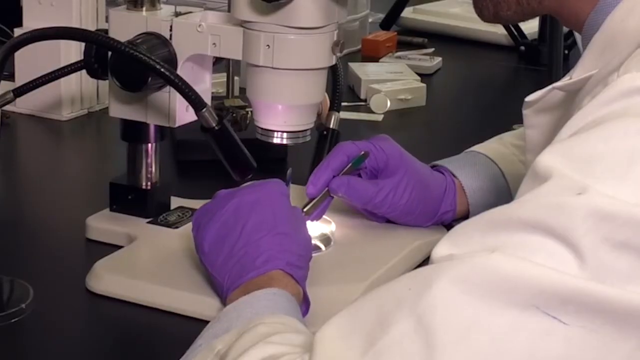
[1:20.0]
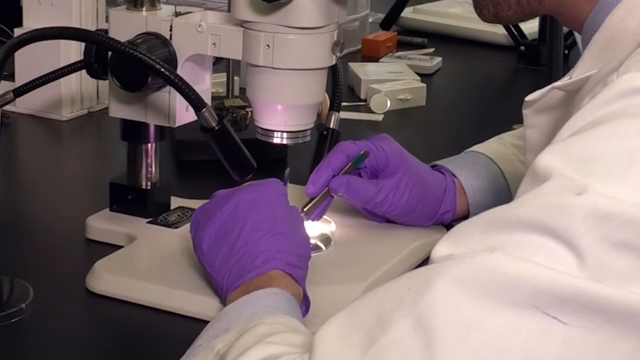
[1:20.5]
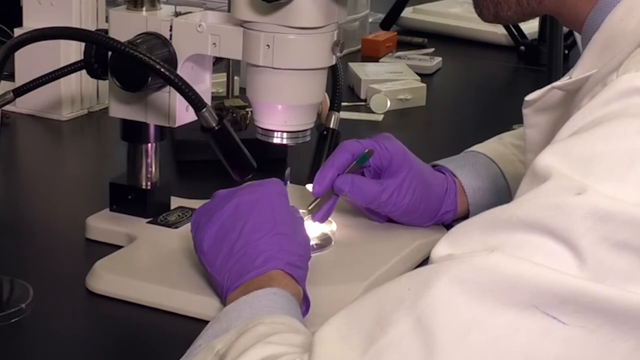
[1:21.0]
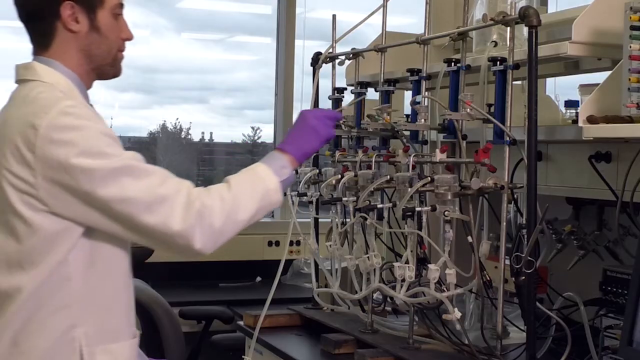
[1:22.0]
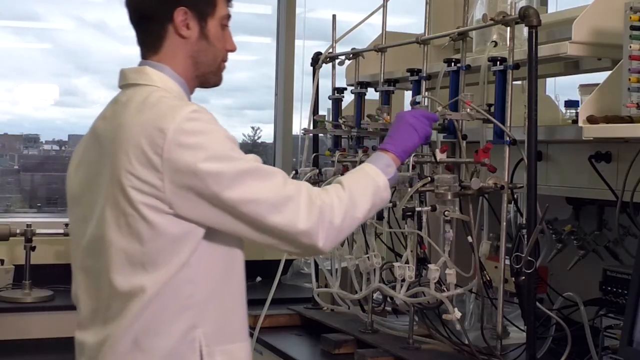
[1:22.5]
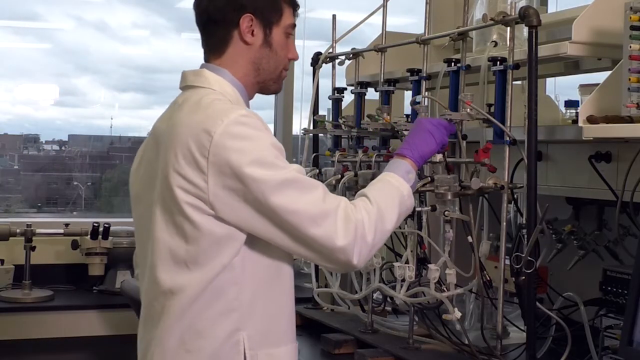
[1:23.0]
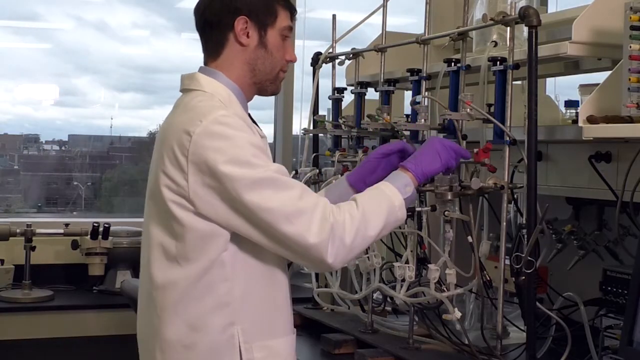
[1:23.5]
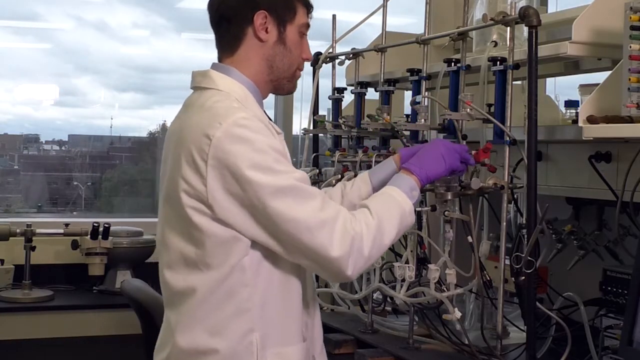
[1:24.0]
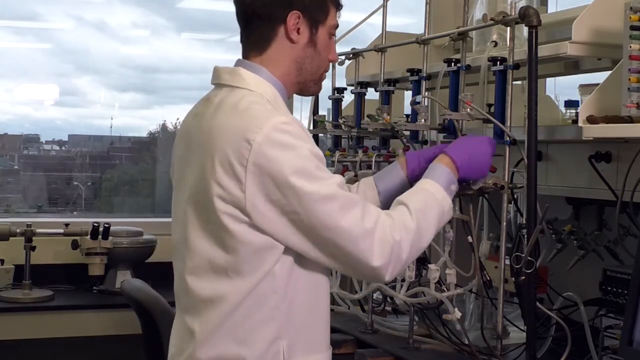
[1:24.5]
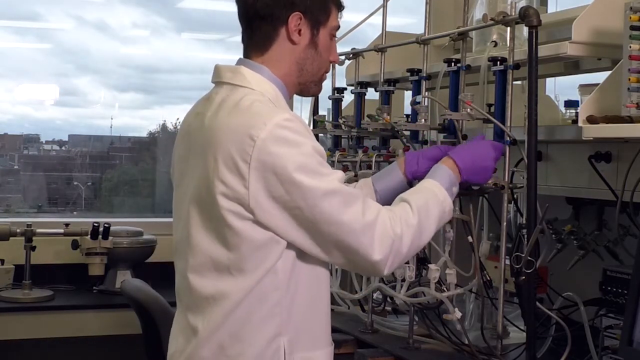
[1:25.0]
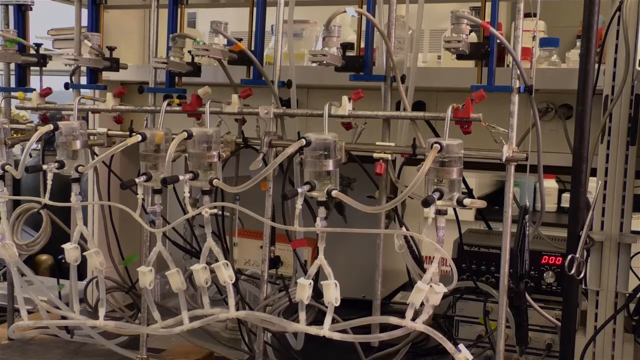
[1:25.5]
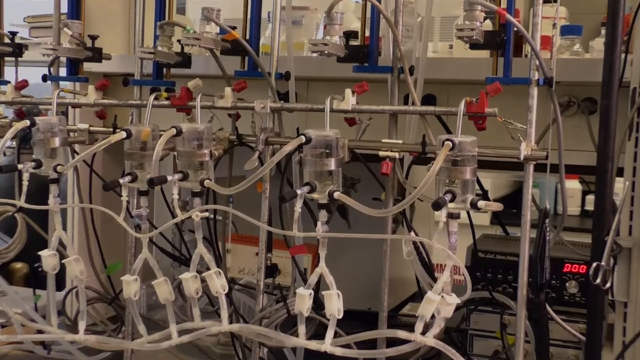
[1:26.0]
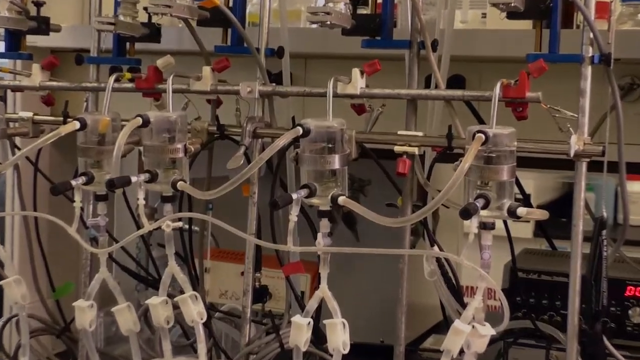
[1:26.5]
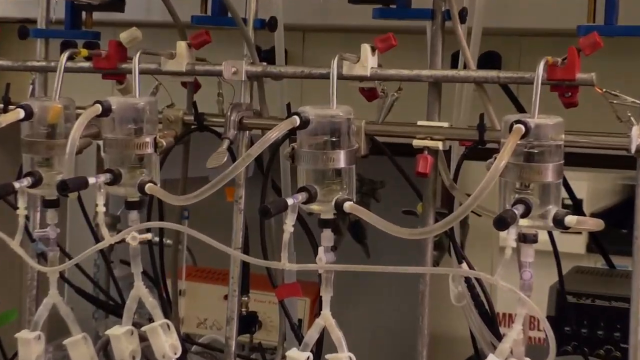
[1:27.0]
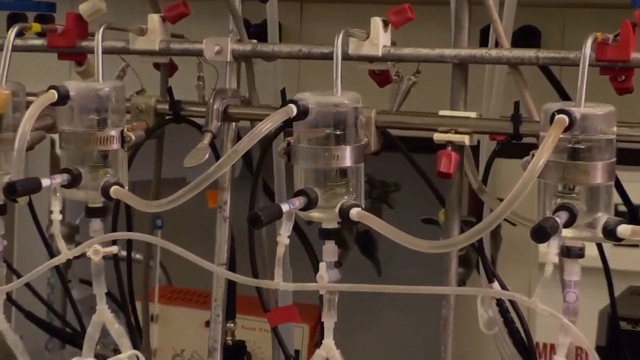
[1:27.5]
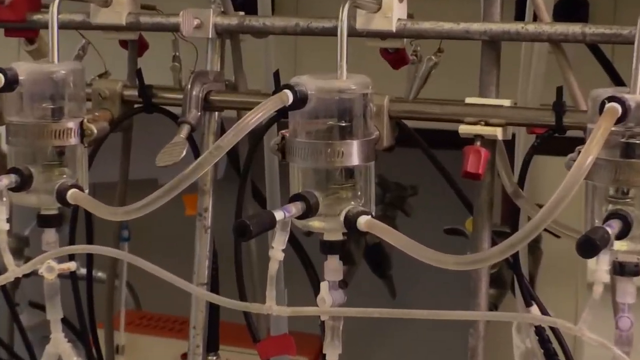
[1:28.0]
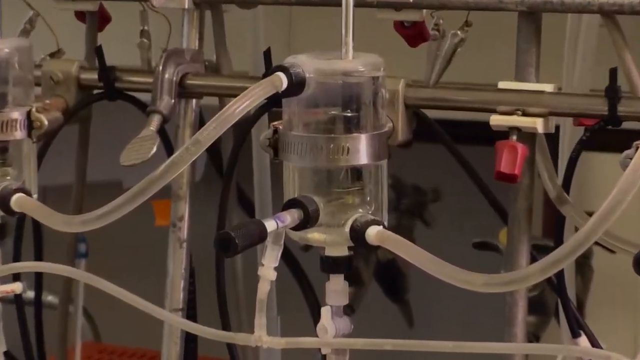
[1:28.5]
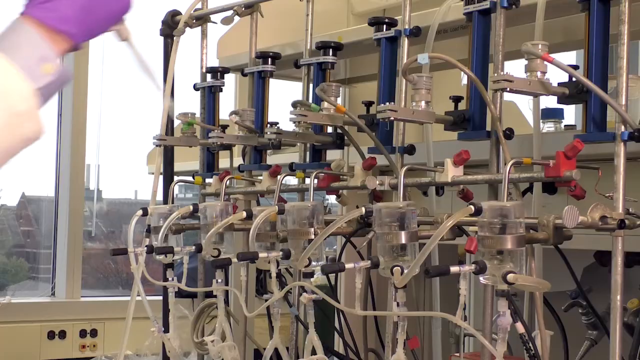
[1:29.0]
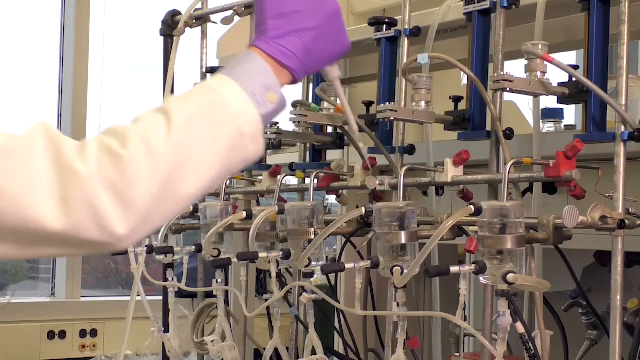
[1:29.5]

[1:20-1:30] A scientist wearing purple gloves examines something under a white microscope, holding a scalpel in his right hand. The view moves across to other medical equipment, which seems to be large tanks all joined together by white plastic tubing. The scientist adds some kind of liquid to the tanks with a pipette. Red taps run all the way along the tubing, and the tubing is joined together and to the tanks with black plastic attachments. A lot of silver piping runs up and down behind the tanks and the plastic tubing. The camera zooms in on one of the tanks as the scientist adds more liquid to it. The scientist, wearing a white coat, works with a microscope, sitting at a black desk. A black, snake-shaped torch illuminates the work he is looking at under the microscope.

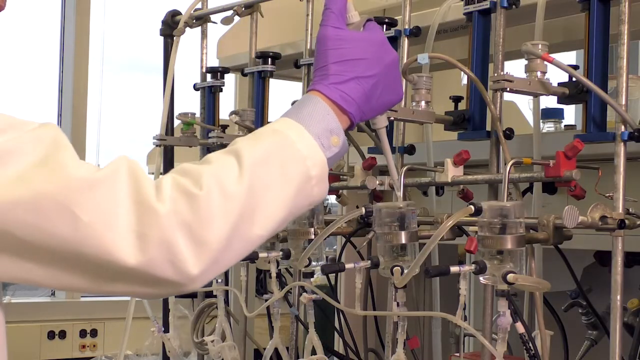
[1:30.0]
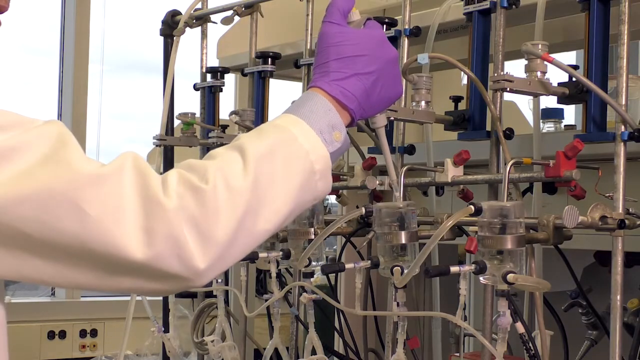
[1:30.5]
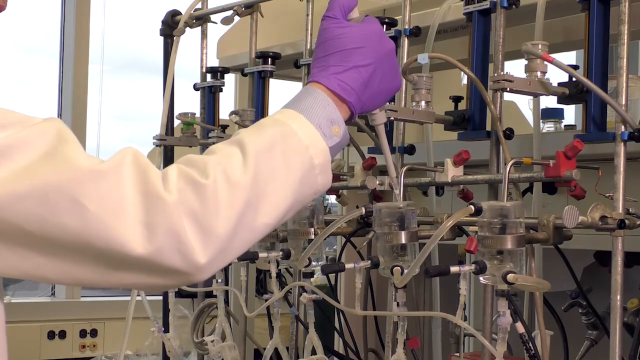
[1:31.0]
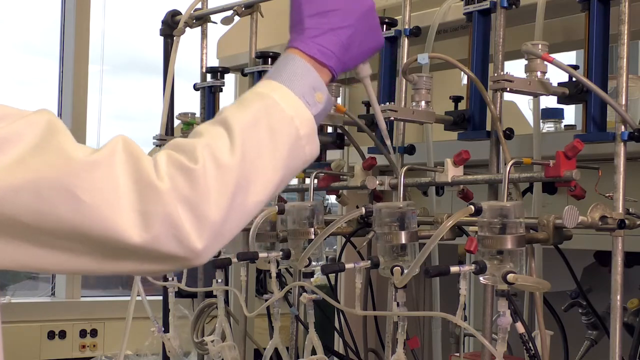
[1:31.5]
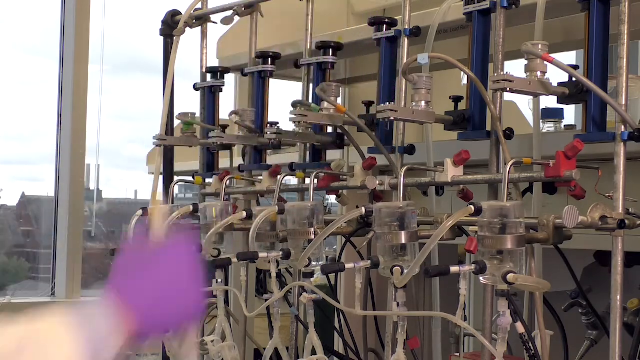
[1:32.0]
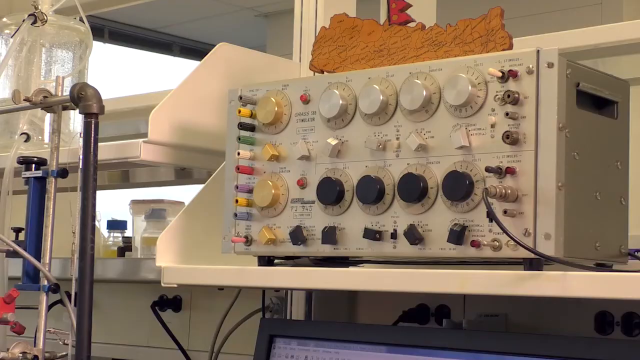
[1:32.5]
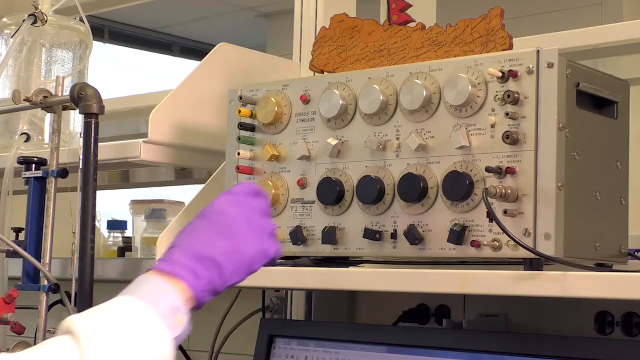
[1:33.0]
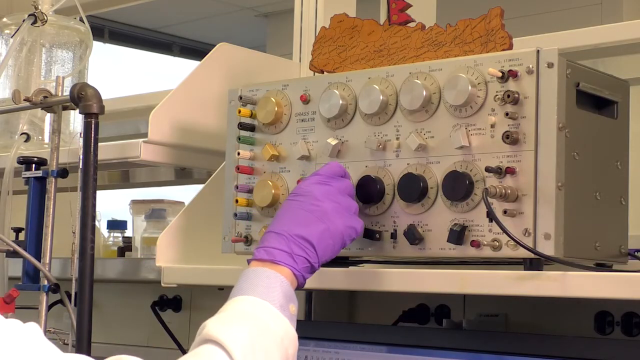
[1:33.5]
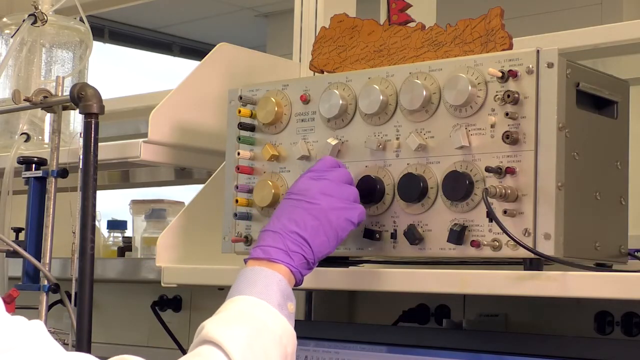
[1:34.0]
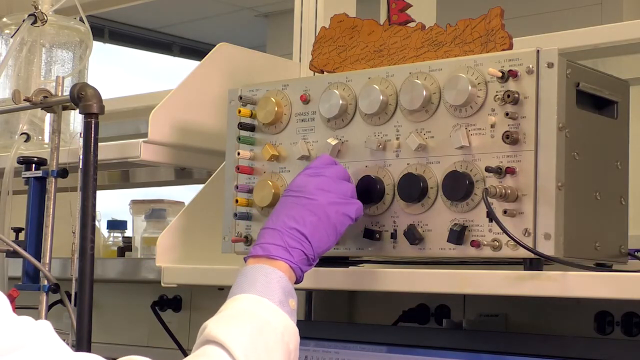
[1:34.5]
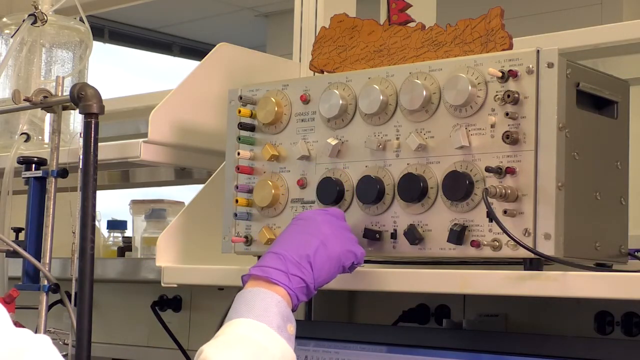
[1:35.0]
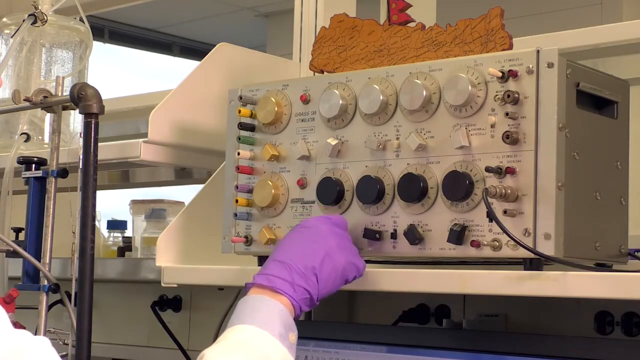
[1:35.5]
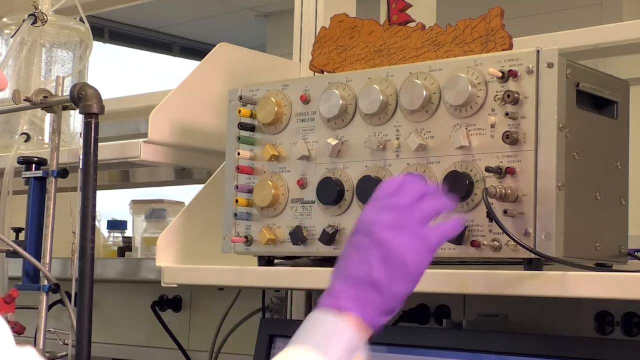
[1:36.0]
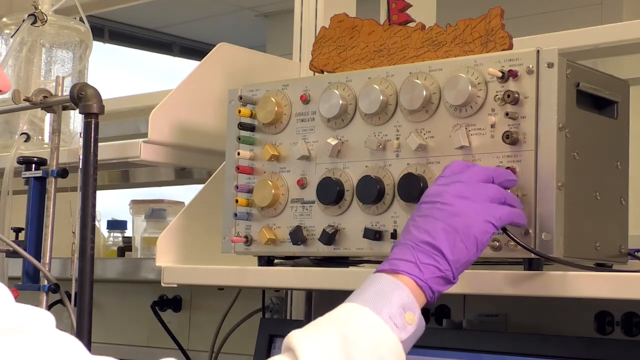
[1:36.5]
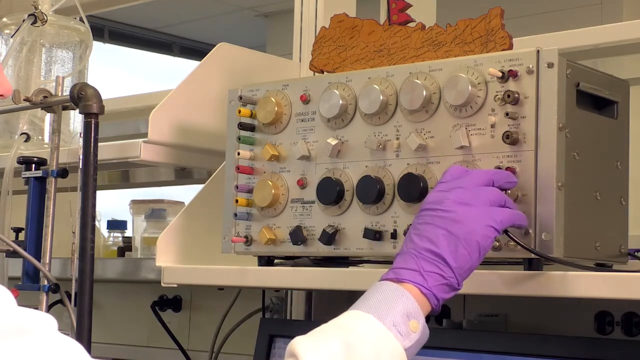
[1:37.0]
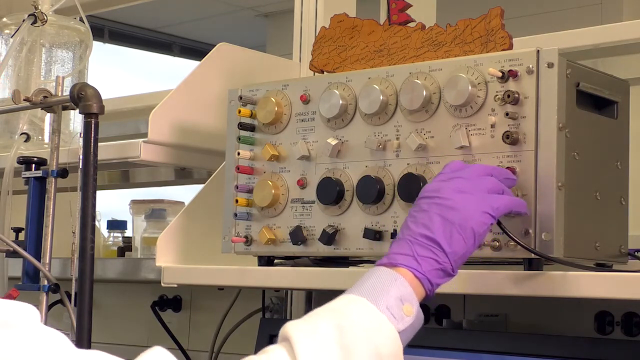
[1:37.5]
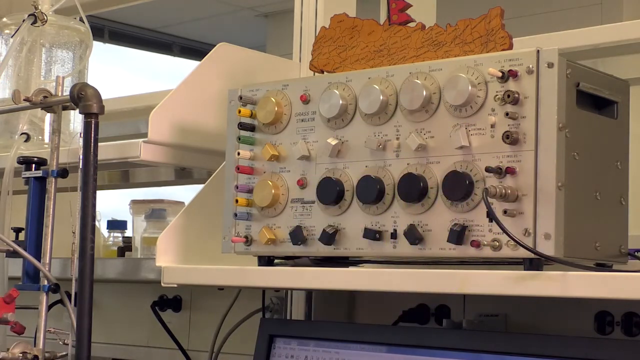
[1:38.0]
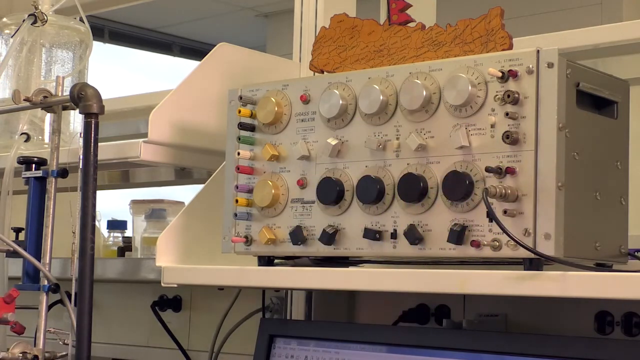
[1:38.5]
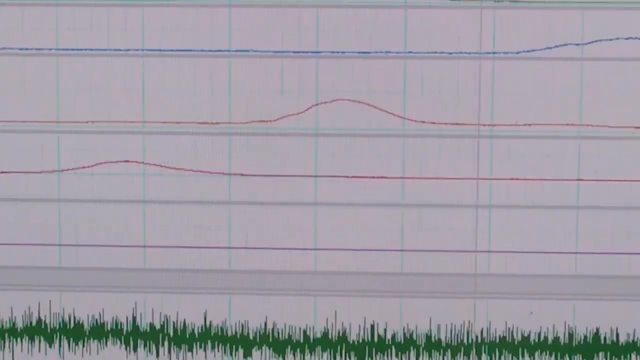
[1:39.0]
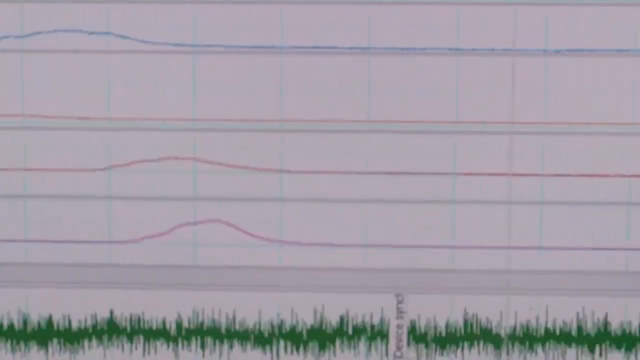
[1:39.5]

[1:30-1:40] Someone wearing a white coat and purple gloves holds a pipette and adds liquid into a white plastic tank that is attached to many others by plastic tubing. A large white box covered in different kinds of switches and dials comes into view: the top row has silver dials and the bottom row has black dials. The person turns and adjusts some of the switches with his gloved hand, calibrating some of the different numbers. There are gold dials on the left-hand side of the box, and a wooden orange shape is sitting on top of the box.